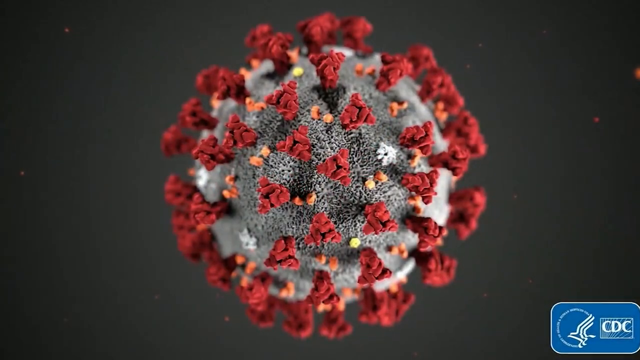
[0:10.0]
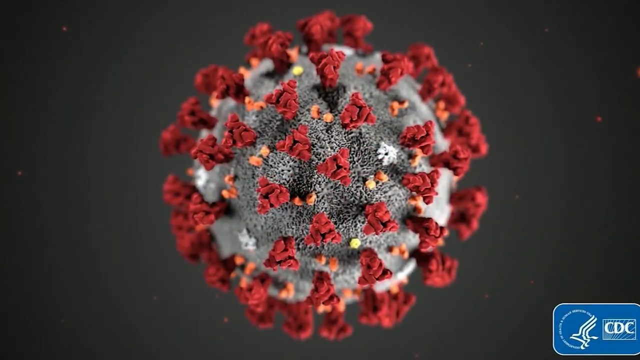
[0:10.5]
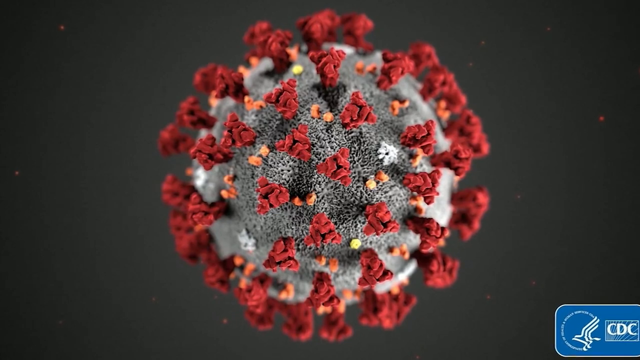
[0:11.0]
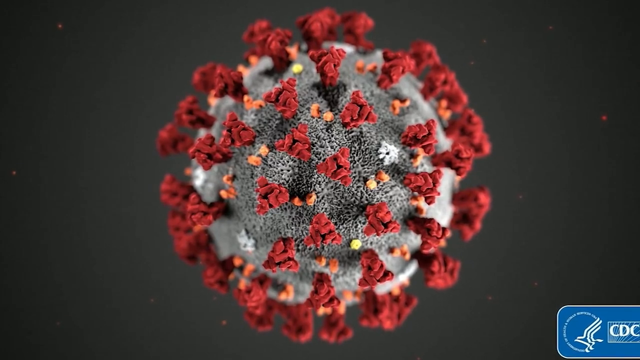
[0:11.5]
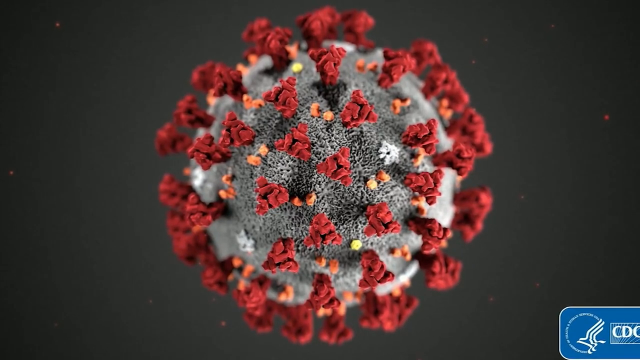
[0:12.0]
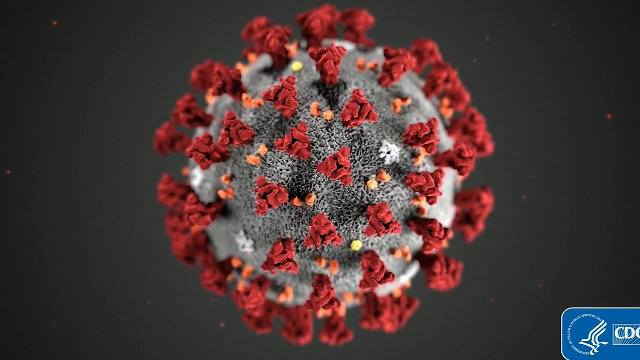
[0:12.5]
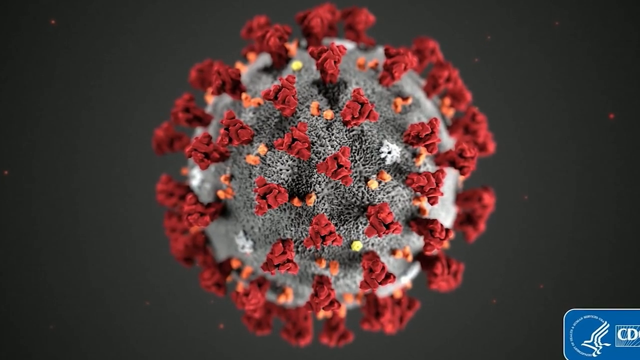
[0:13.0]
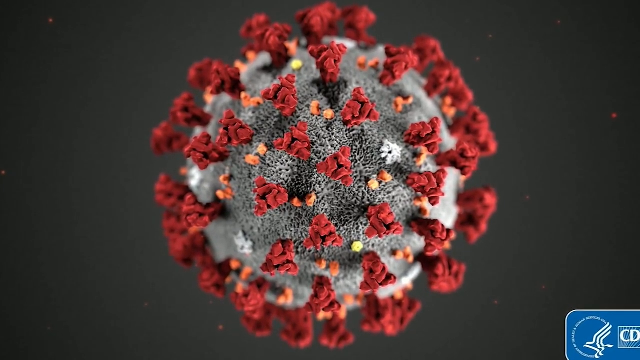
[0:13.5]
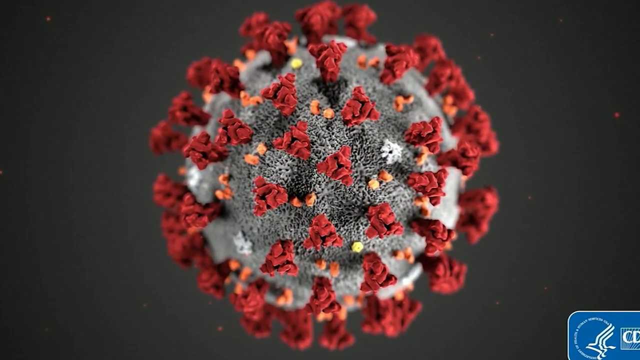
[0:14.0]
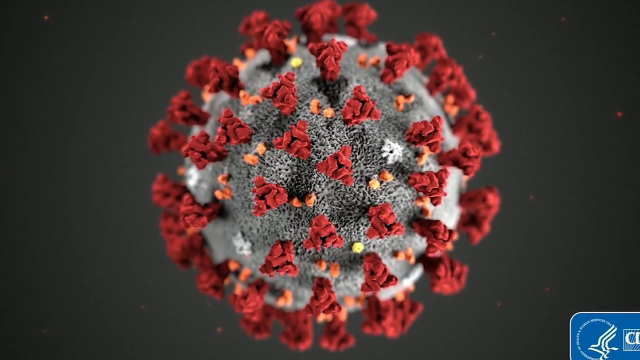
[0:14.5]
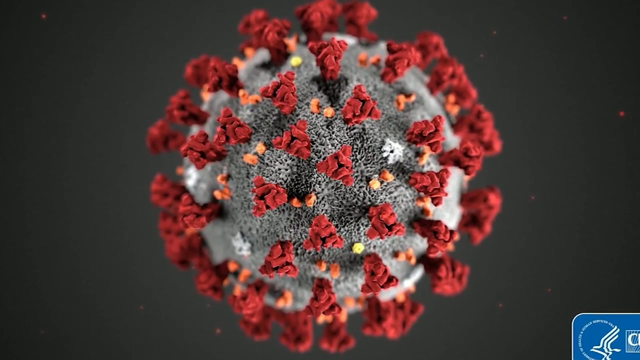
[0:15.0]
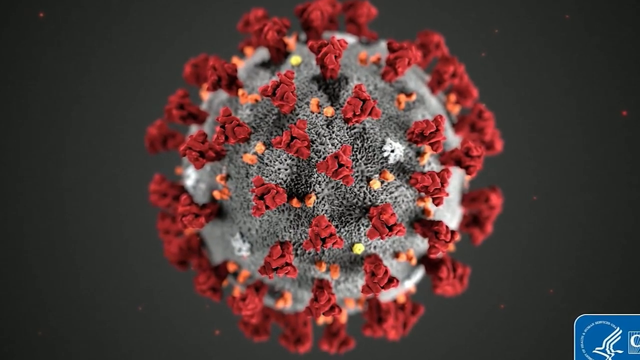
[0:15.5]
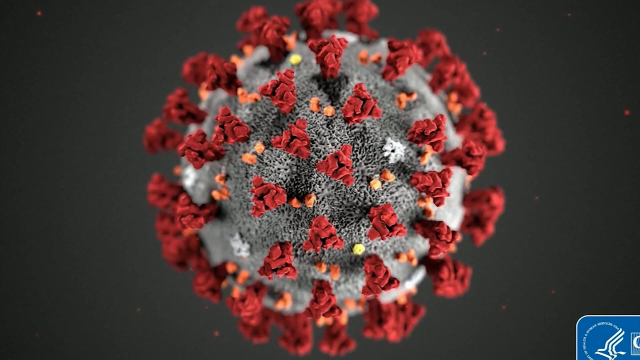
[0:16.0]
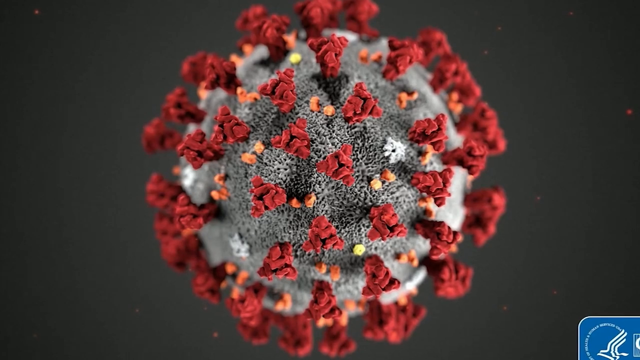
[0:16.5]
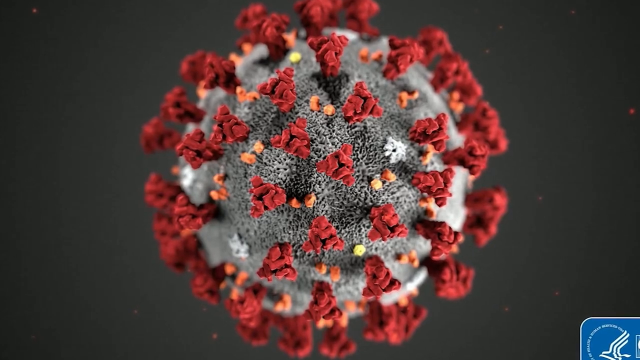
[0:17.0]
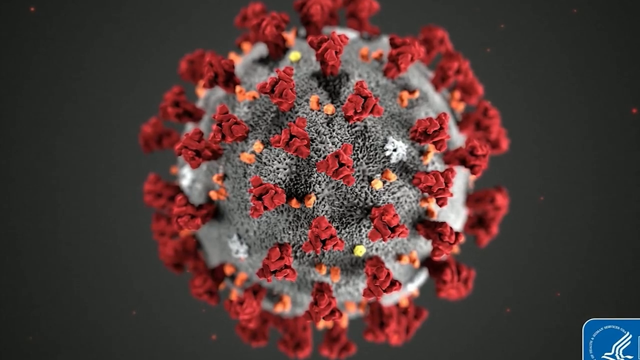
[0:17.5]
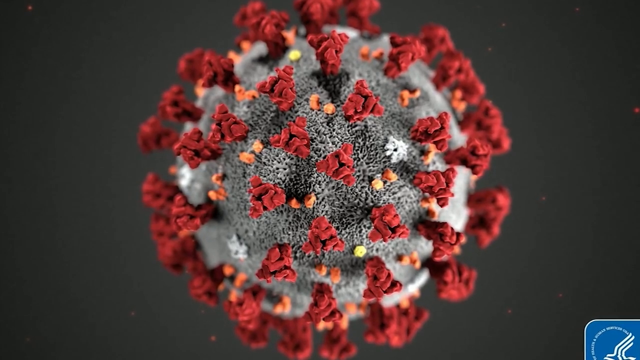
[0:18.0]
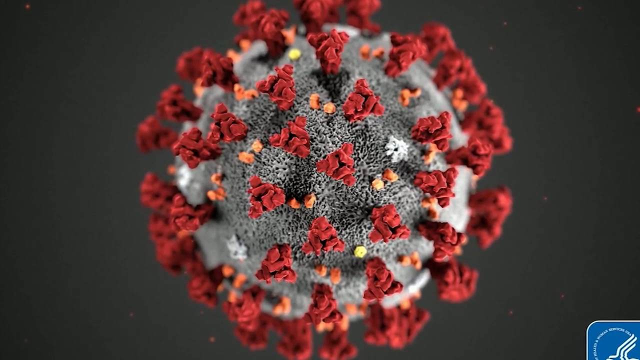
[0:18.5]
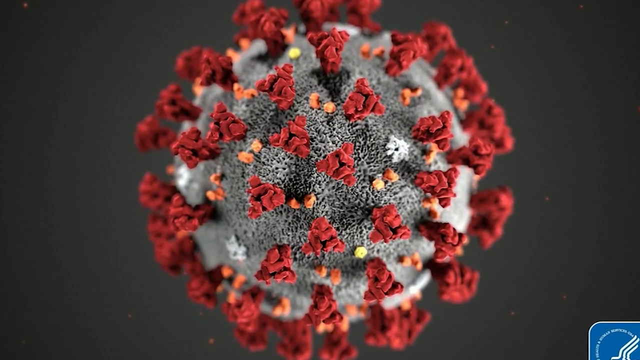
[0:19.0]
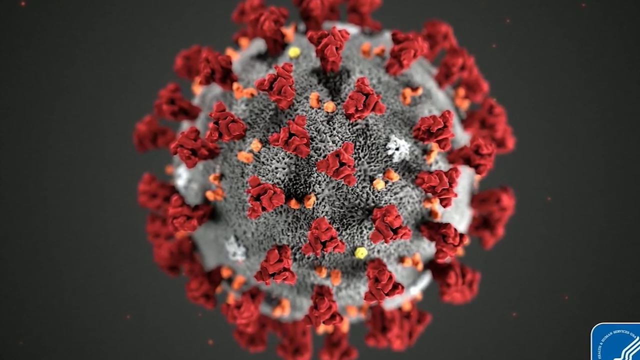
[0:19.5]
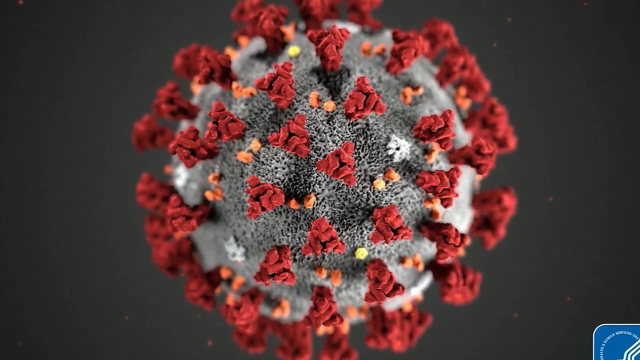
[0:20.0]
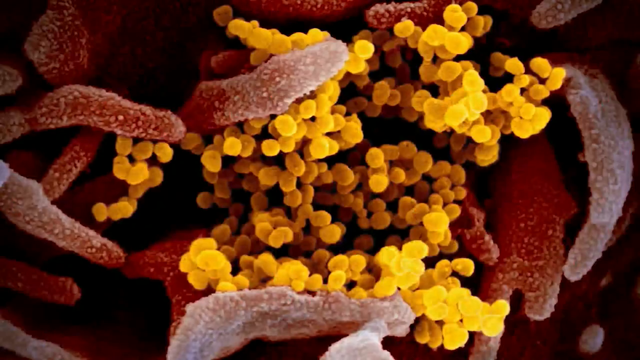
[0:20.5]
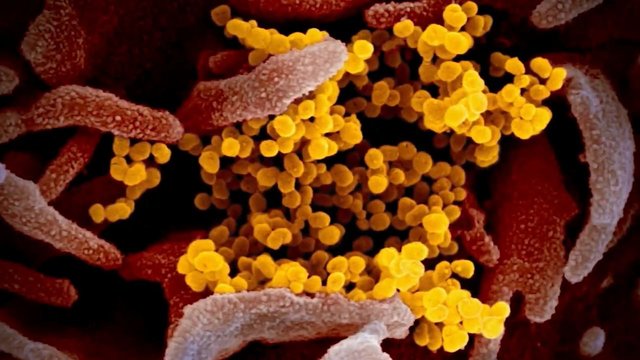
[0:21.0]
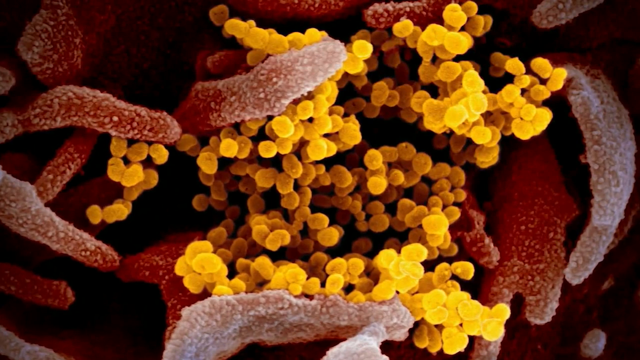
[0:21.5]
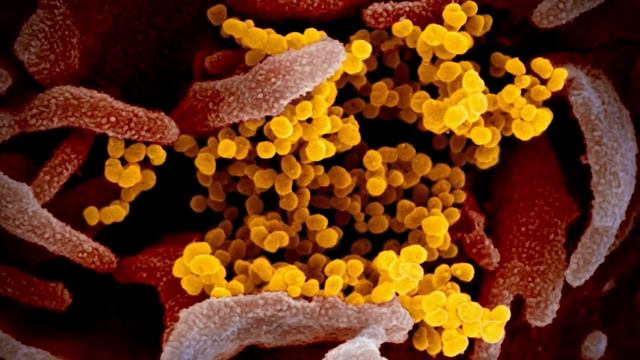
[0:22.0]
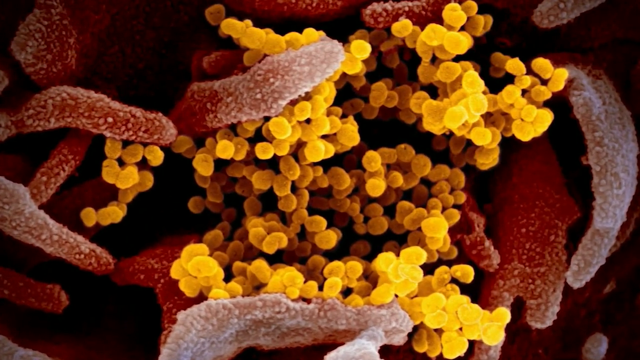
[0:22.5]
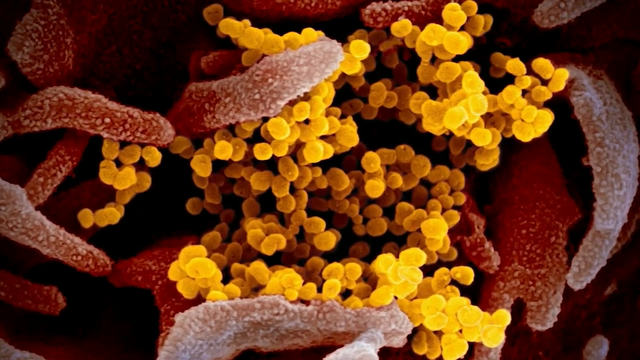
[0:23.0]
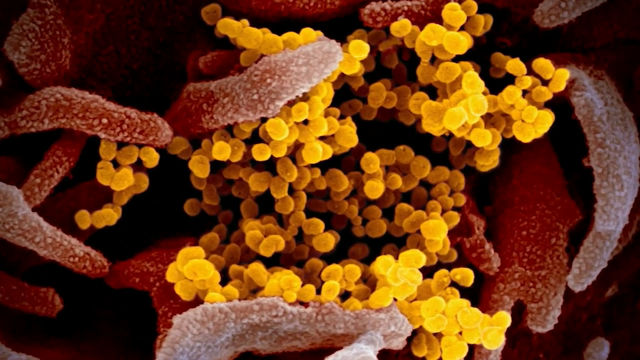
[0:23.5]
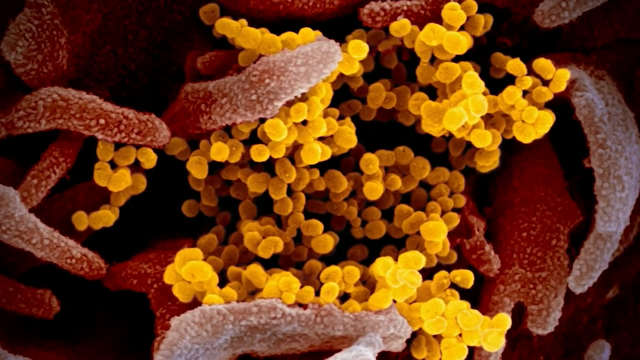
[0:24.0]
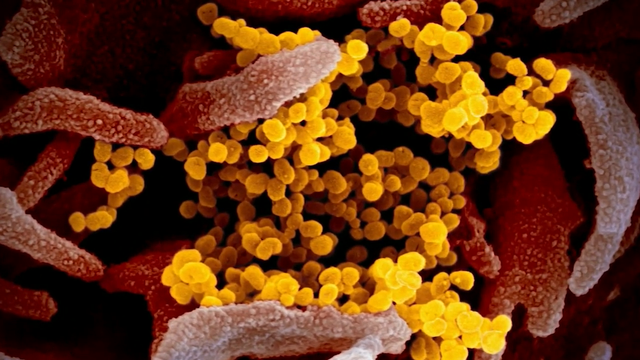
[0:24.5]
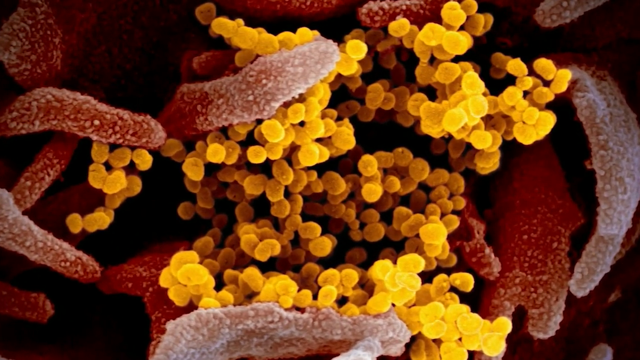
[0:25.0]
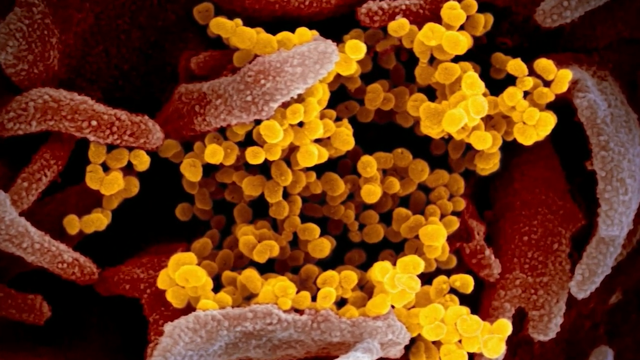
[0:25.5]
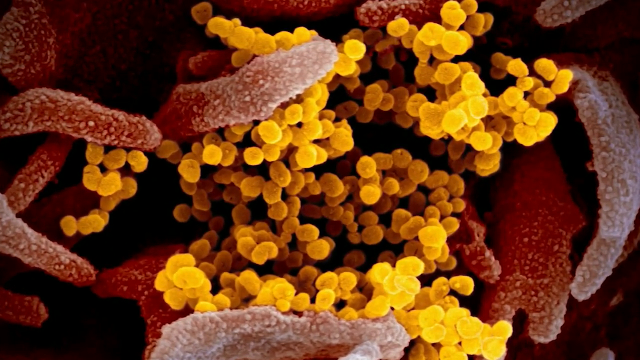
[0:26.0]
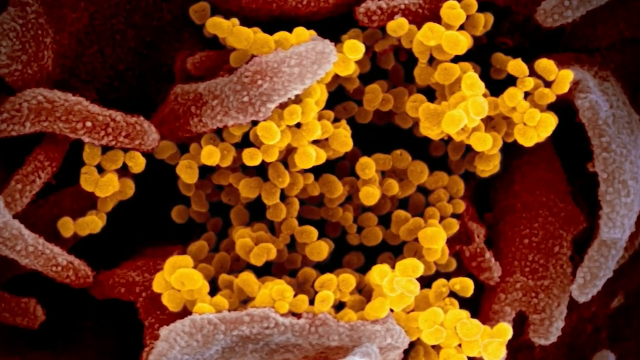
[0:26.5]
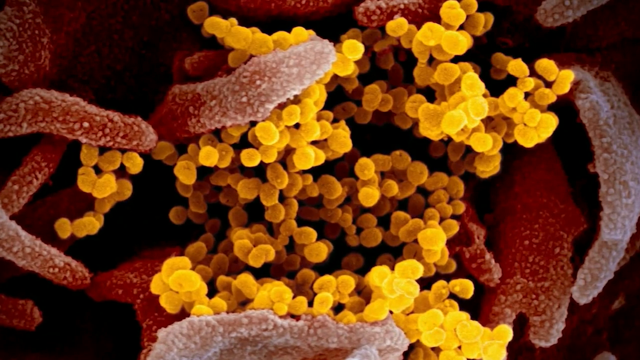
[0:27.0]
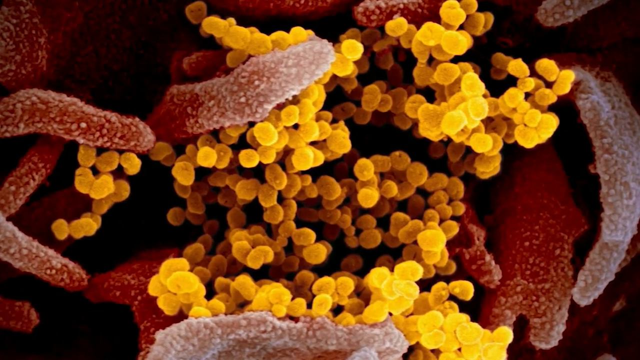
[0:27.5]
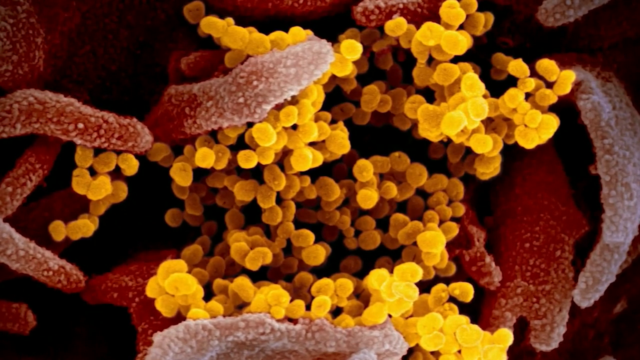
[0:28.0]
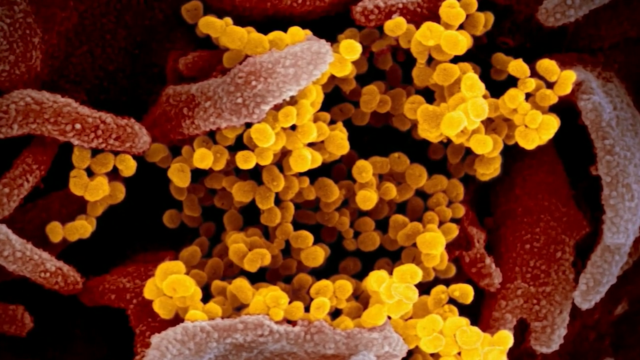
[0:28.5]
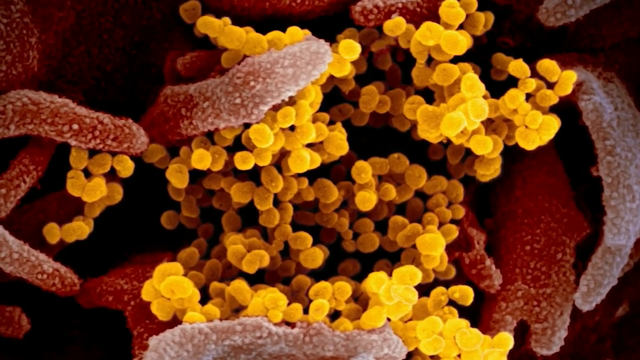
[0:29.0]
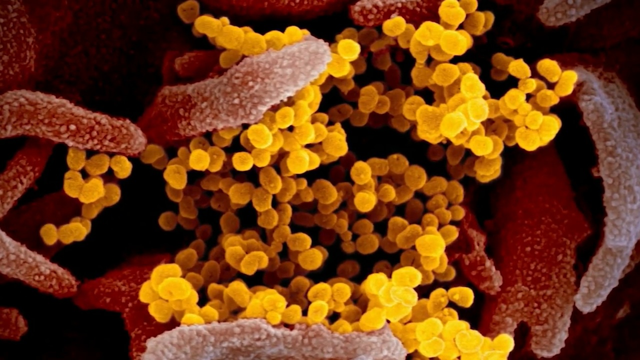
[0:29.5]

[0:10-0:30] A coronavirus symbol appears with red, orange and white colors representing bacteria, and a gray round shape that could be the cell being affected. Next comes a page with what appear to be micro-worms or micro-bacteria with yellow particles in the middle, possibly germs under a microscope. Yellow is circled around in the middle, and on top there is what appears to be veins, bacteria, worms or microscopic bacteria fighting off the body's cells.